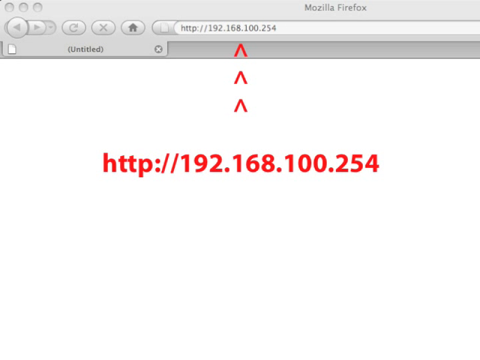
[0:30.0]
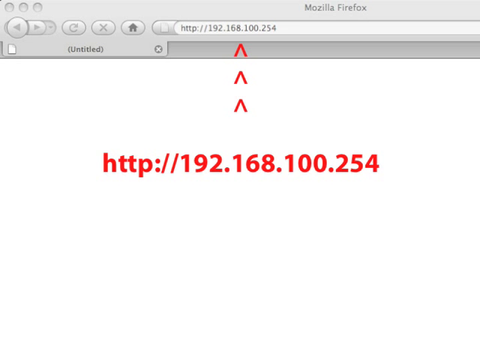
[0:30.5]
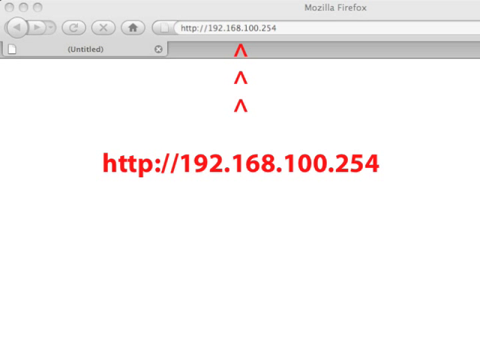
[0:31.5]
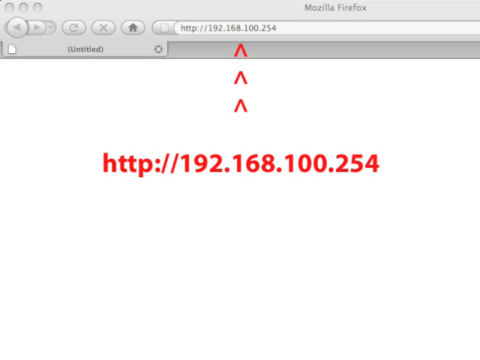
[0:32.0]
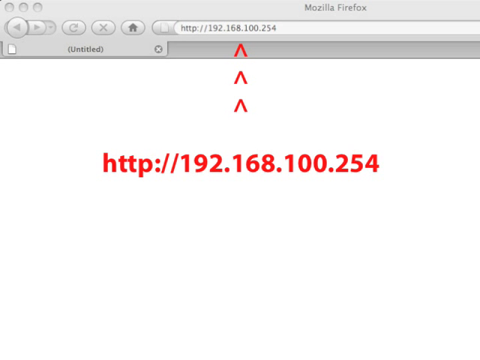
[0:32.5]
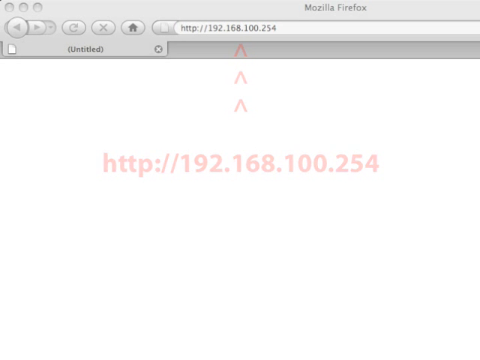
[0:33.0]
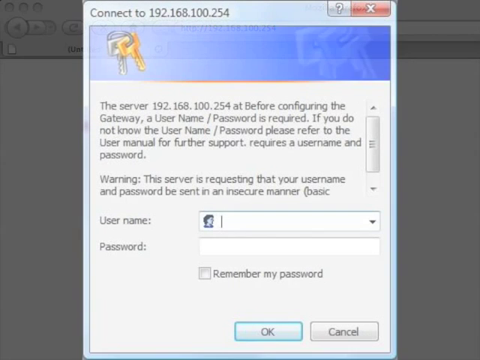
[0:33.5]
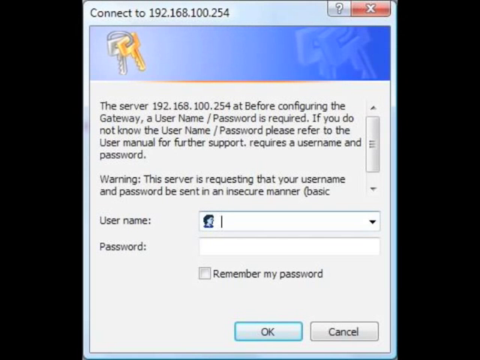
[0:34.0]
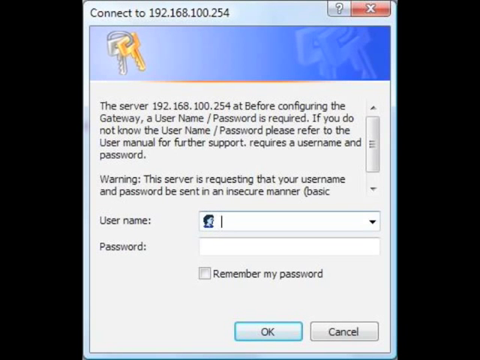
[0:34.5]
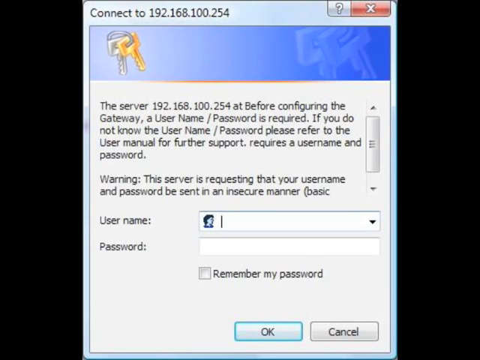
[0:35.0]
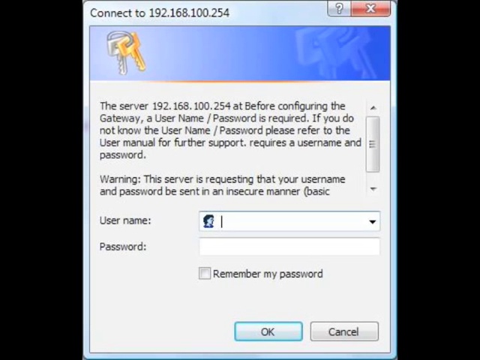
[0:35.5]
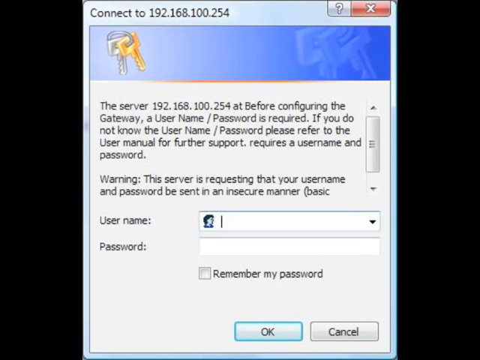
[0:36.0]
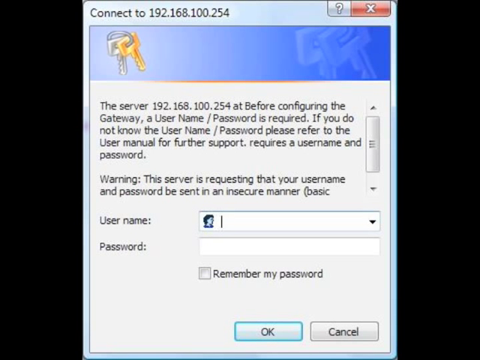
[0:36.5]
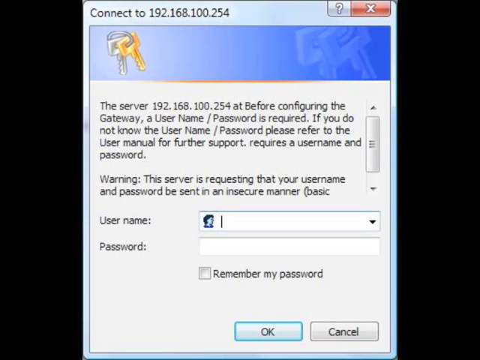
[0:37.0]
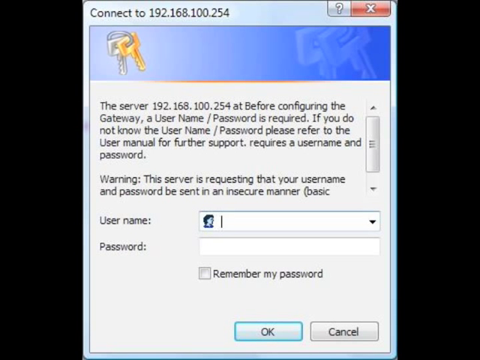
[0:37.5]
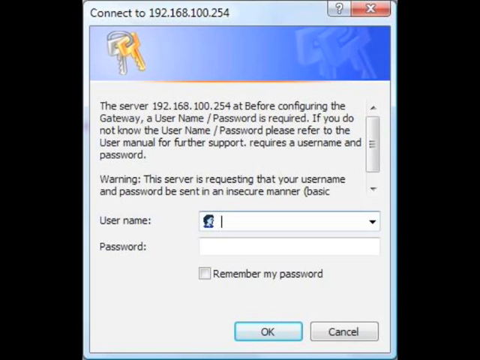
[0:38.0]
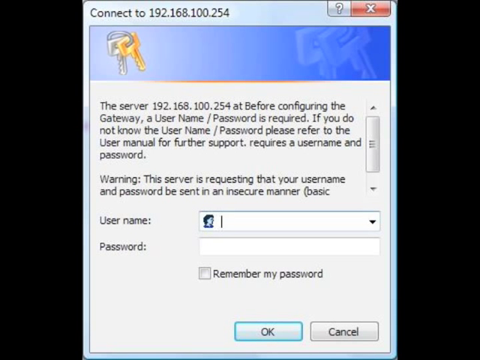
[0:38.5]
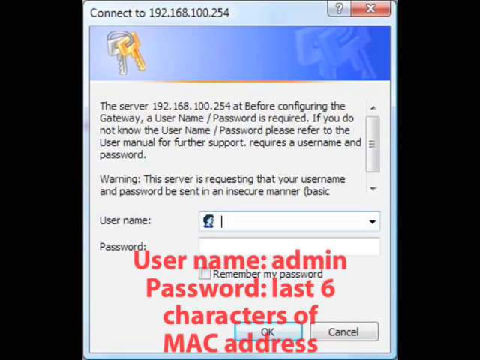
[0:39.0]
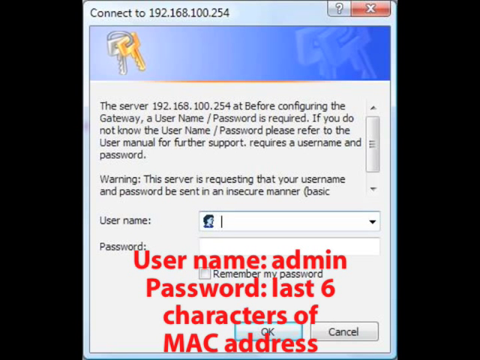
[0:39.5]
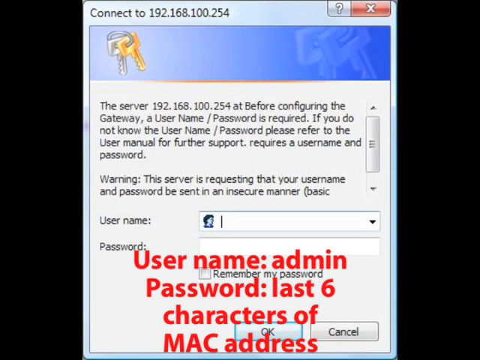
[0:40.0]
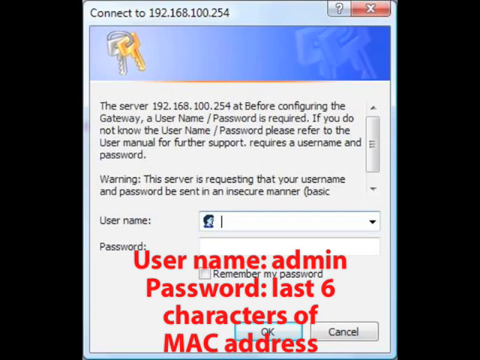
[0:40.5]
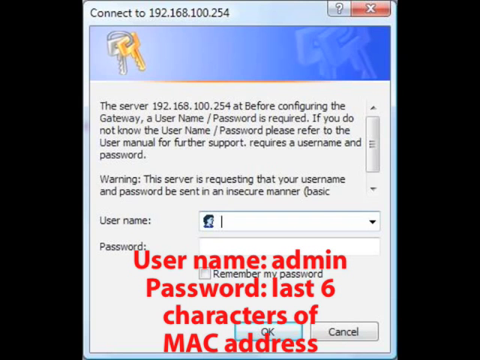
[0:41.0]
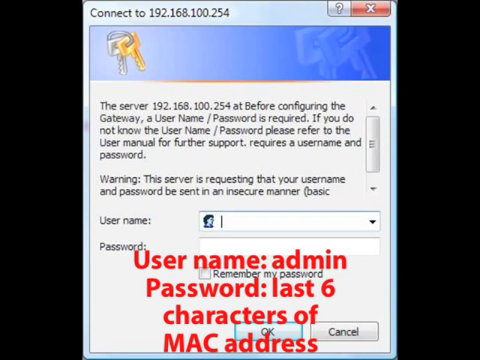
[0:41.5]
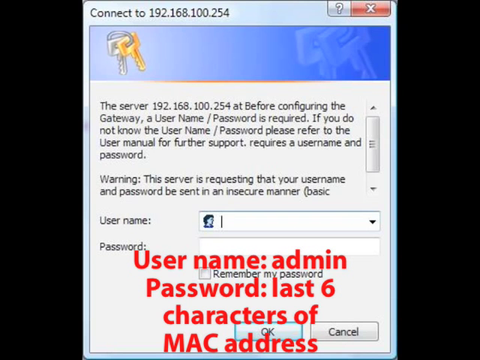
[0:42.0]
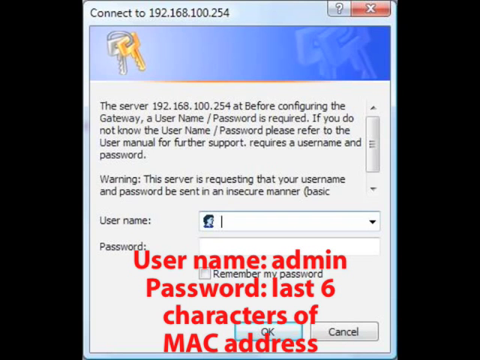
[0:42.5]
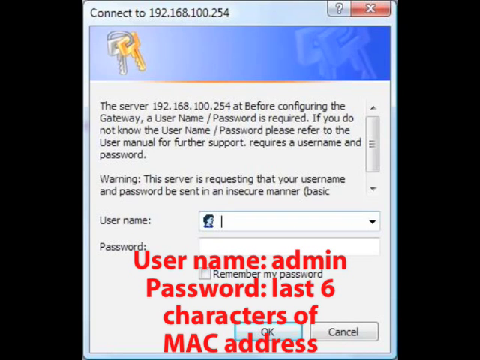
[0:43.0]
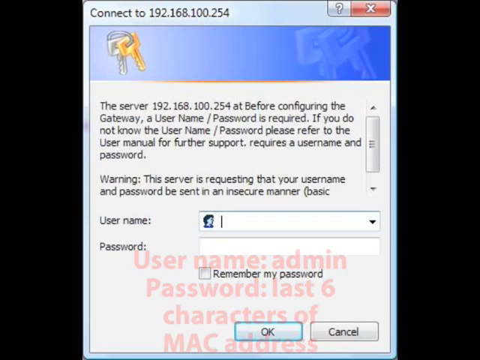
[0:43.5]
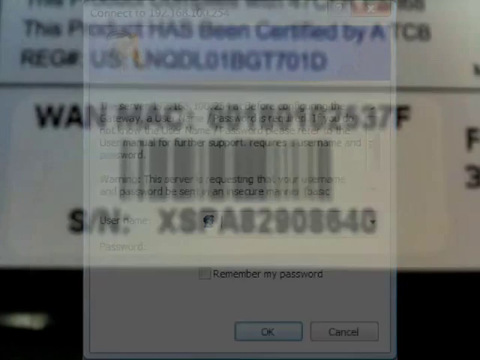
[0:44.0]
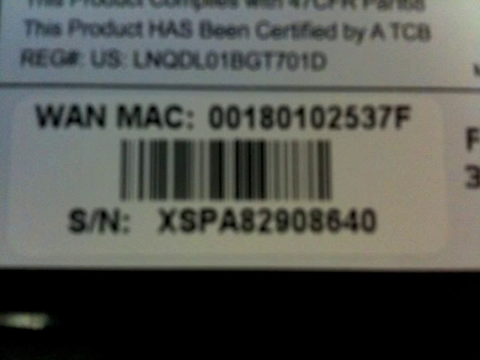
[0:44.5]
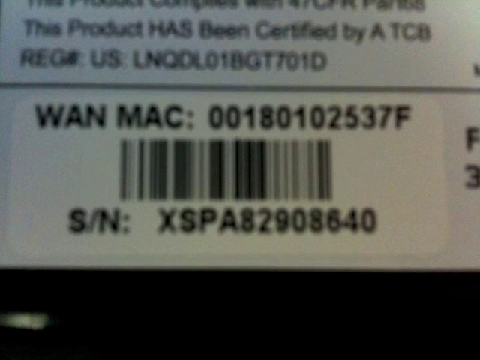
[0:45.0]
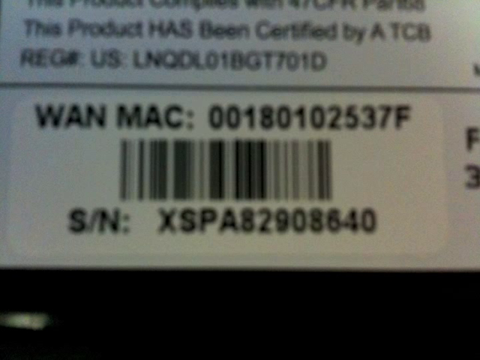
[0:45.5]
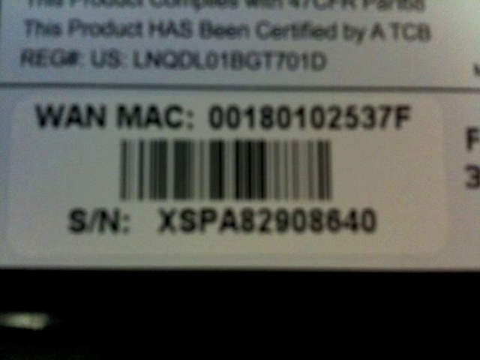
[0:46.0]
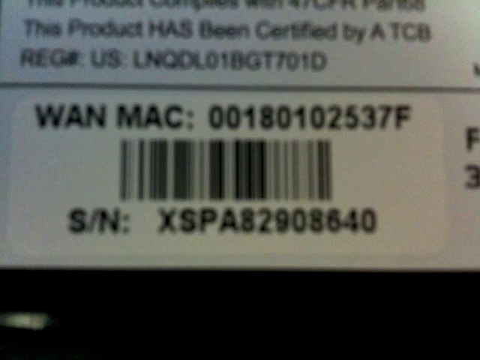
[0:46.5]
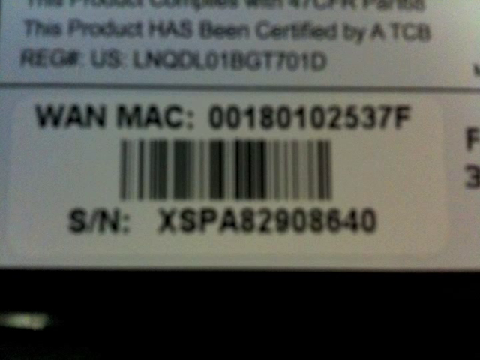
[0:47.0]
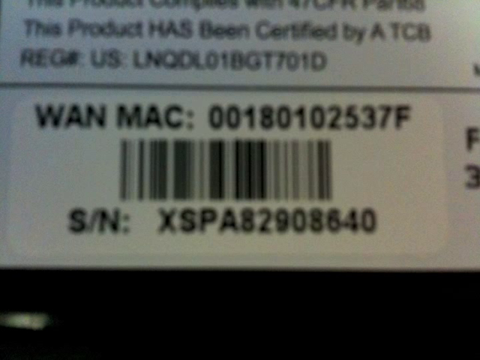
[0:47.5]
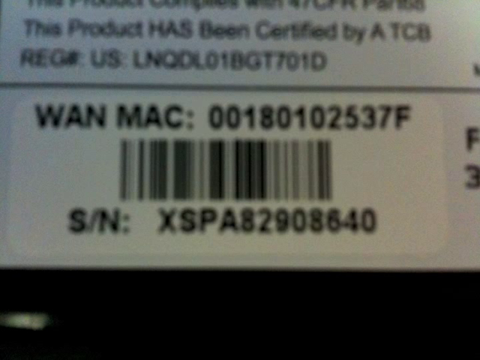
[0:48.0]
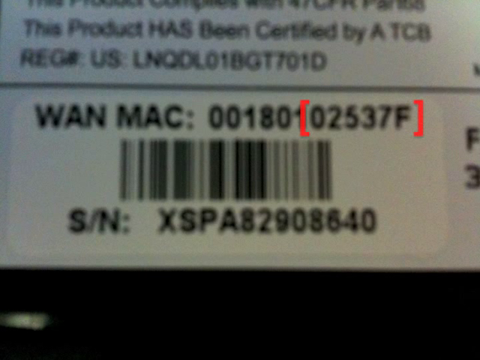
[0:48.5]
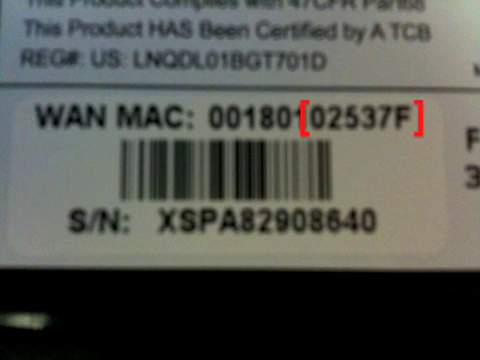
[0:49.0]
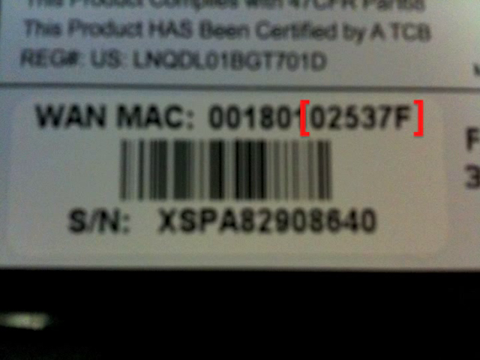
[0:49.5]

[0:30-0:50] A computer screen shows a Mozilla Firefox internet browser, only partially in view, with the top left part of the screen shown. An IP address is in the search bar, red overlay text shows the same IP address, and three arrows point up towards the search bar. The video transitions to an image on a black background: a cut-out screen grab of a computer window with inputs for a username and password to connect to an IP address. Red overlay text then appears at the bottom centre of the screen showing a username and password to input. Next comes a blurry close-up image of a product barcode sticker showing a serial number and a WAN MAC number.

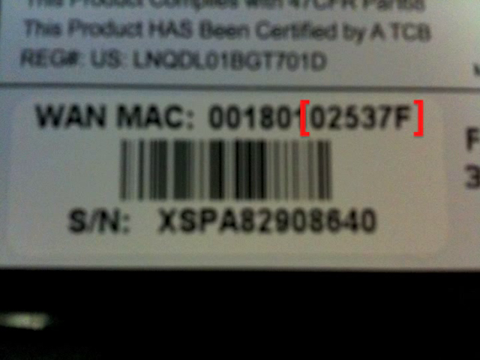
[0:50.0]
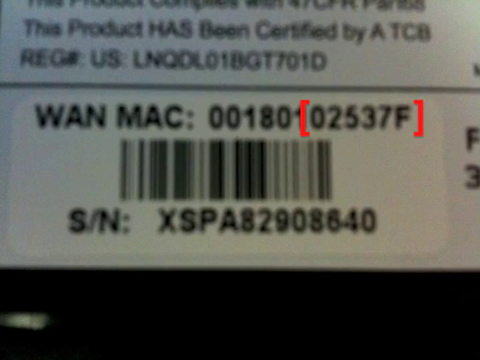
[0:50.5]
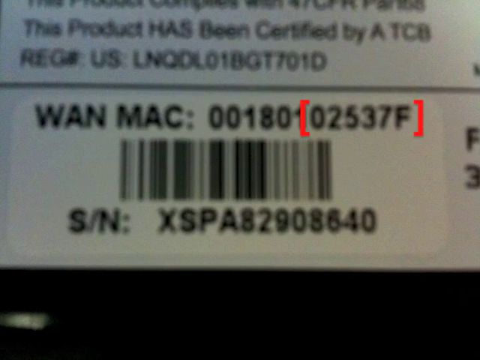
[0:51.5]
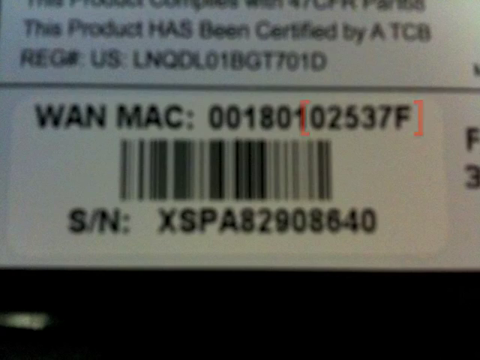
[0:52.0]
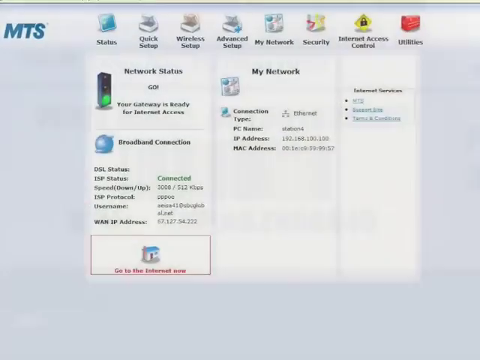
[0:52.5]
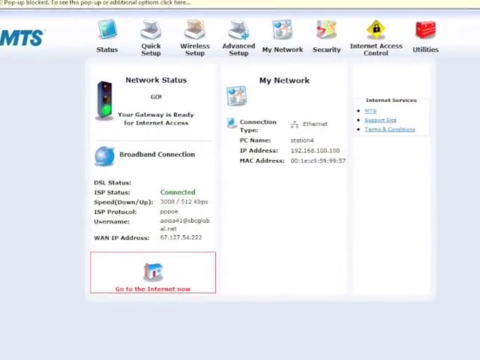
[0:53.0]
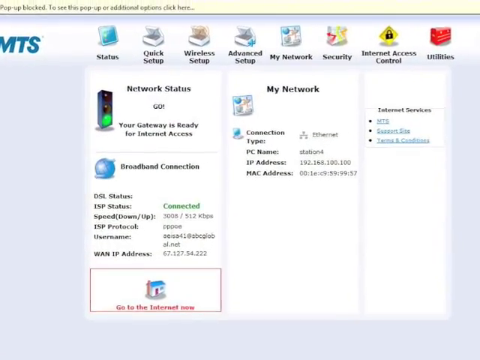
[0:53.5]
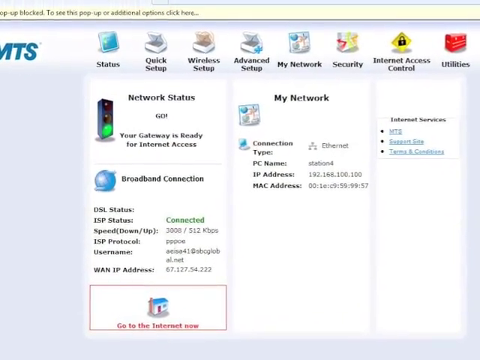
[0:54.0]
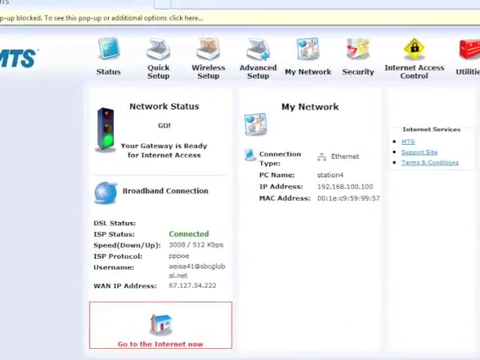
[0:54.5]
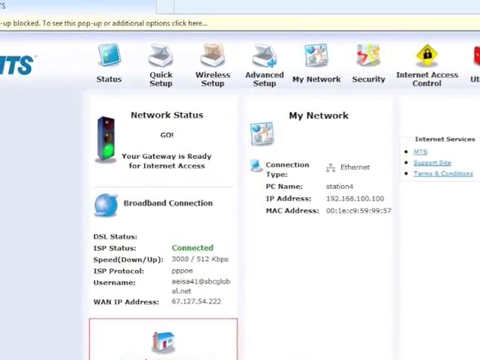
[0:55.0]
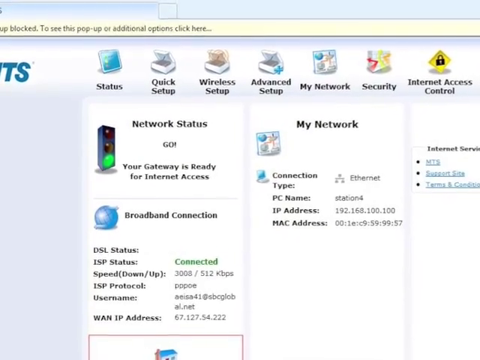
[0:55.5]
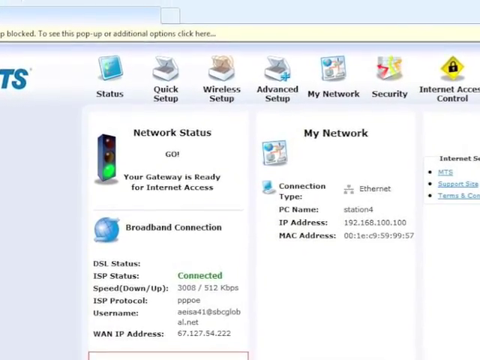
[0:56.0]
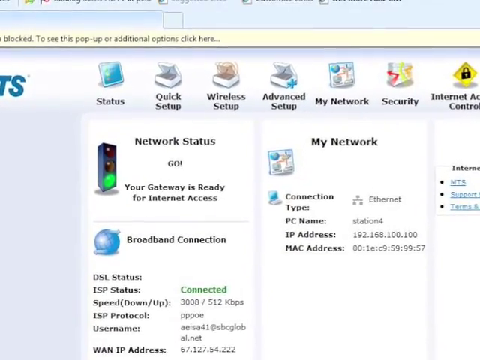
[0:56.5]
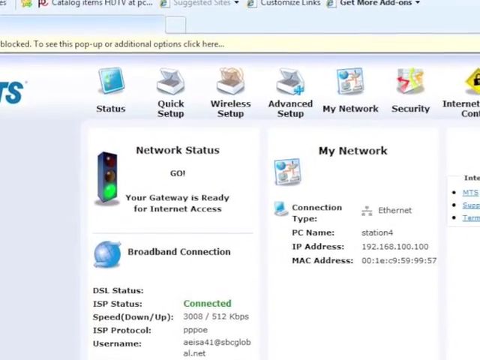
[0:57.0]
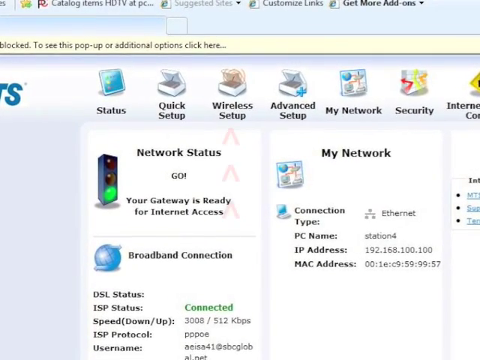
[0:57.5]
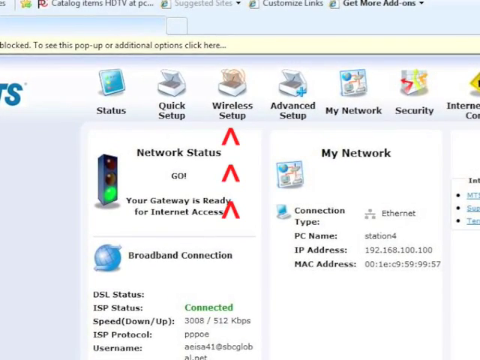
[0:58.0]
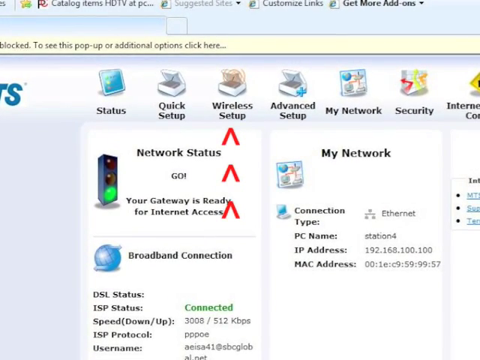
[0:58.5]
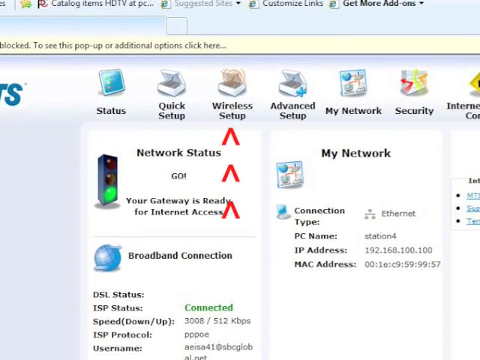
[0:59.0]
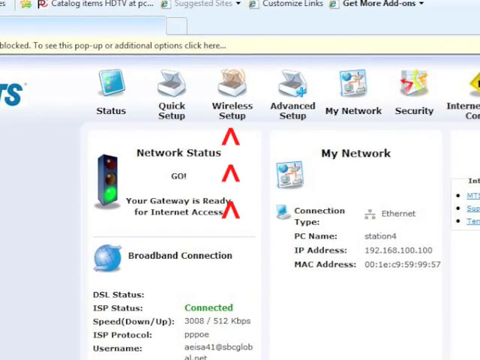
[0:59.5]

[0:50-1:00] A static, blurry close-up image of the back of a product shows a barcode sticker with a serial number and a WAN MAC number. An overlay uses square brackets to highlight the last six characters of the MAC number. The video then transitions to a computer screen showing settings for a network, with menu options running along the top of the screen; the screen shows the network status, broadband connection and "my network" information. The view zooms in towards the menu at the top, and three red arrows appear pointing upwards to the wireless setup menu option.